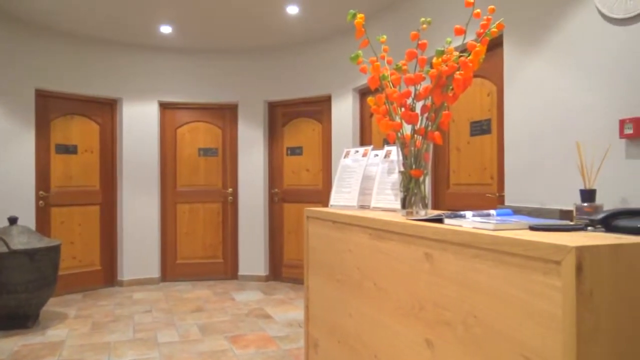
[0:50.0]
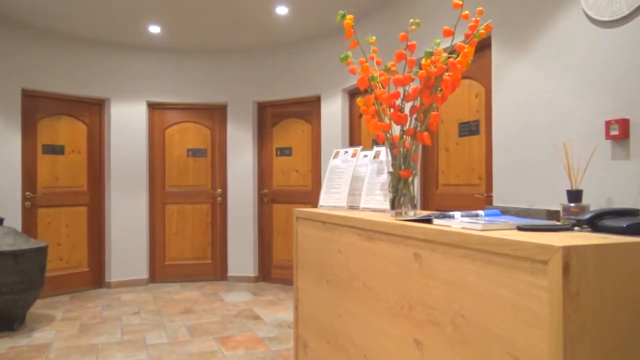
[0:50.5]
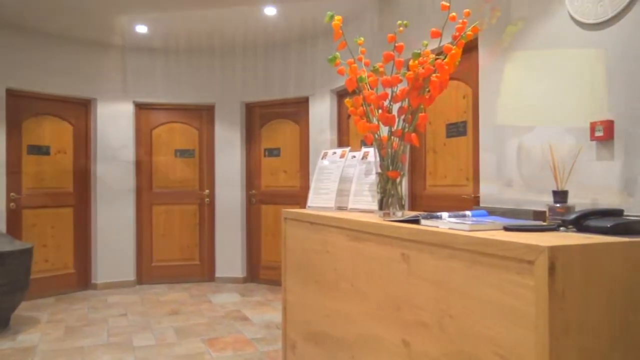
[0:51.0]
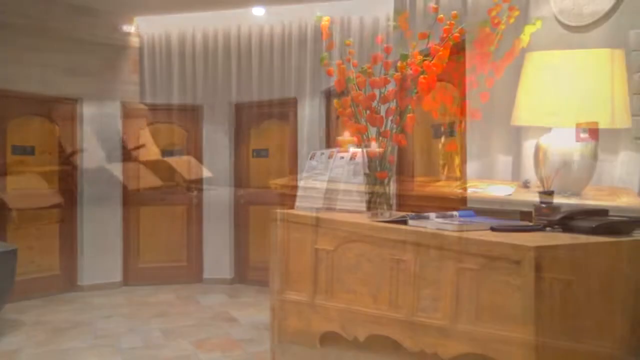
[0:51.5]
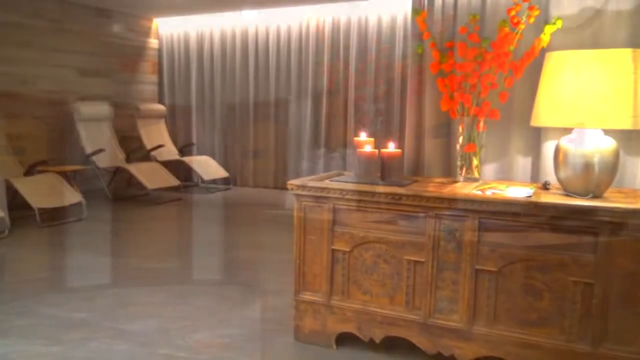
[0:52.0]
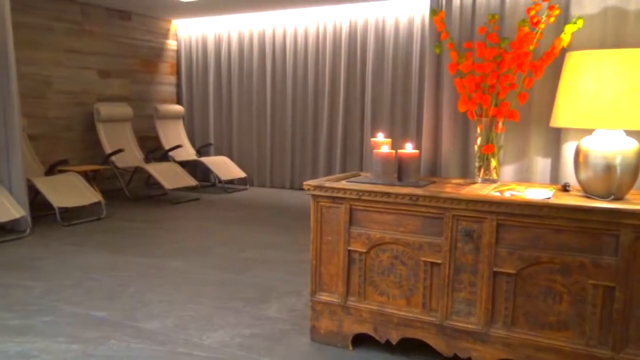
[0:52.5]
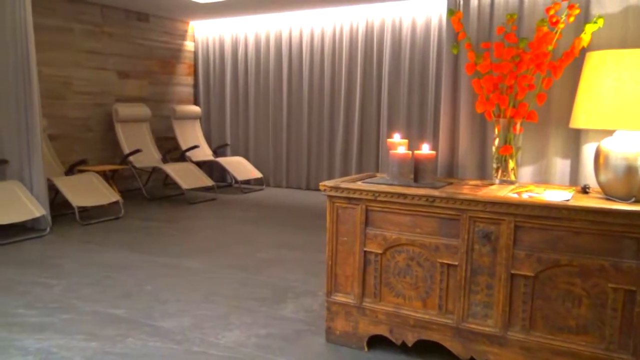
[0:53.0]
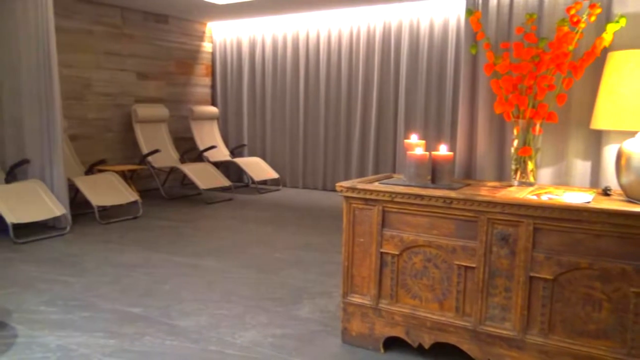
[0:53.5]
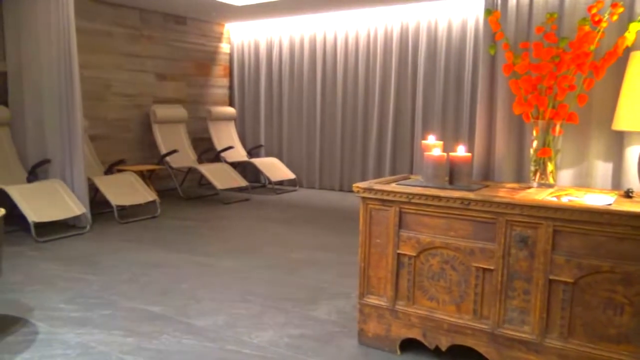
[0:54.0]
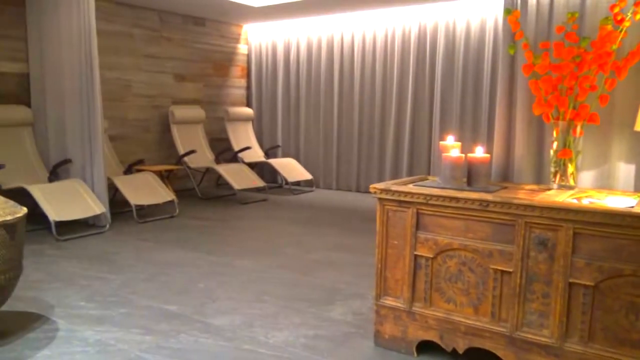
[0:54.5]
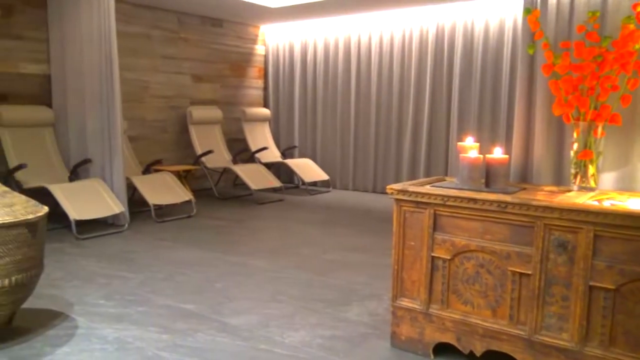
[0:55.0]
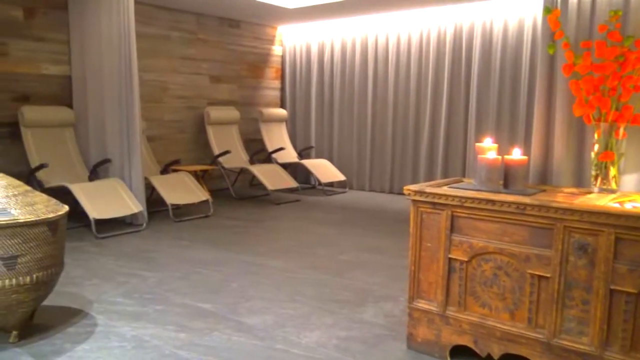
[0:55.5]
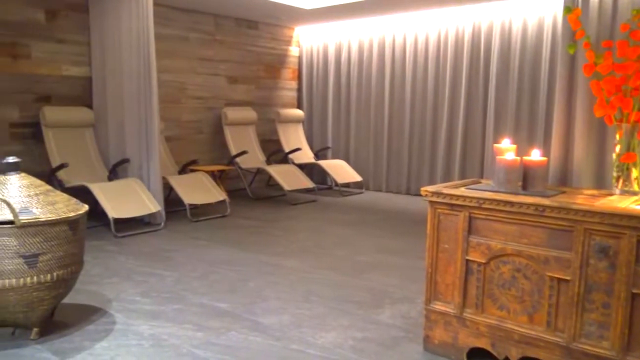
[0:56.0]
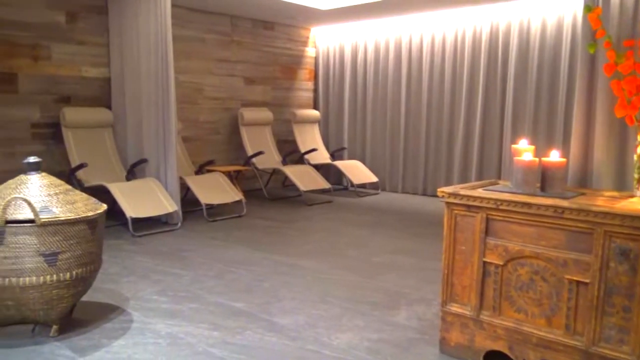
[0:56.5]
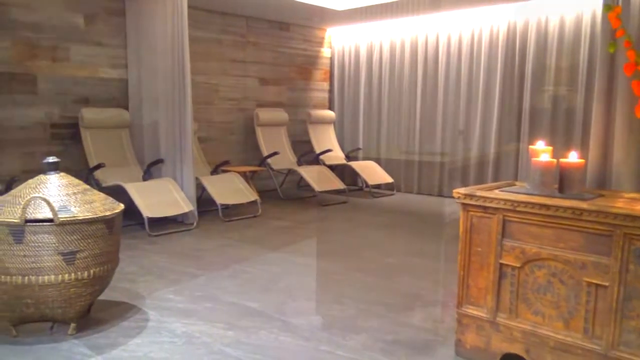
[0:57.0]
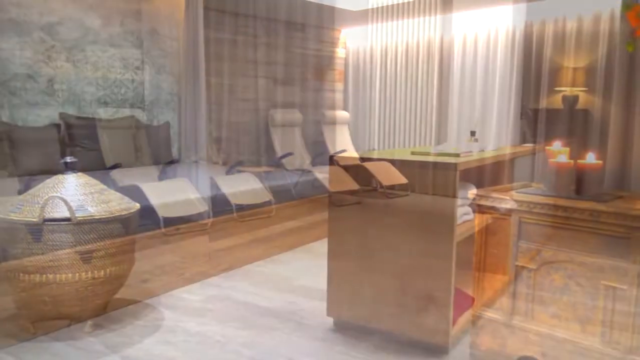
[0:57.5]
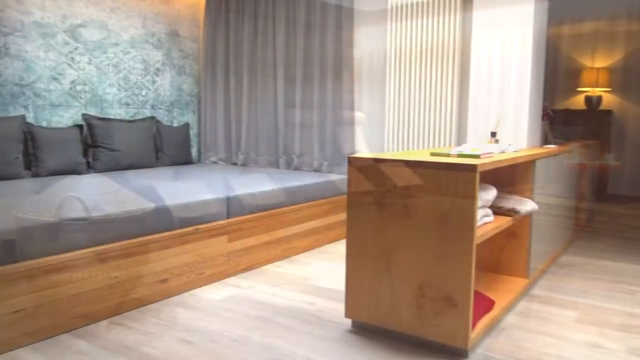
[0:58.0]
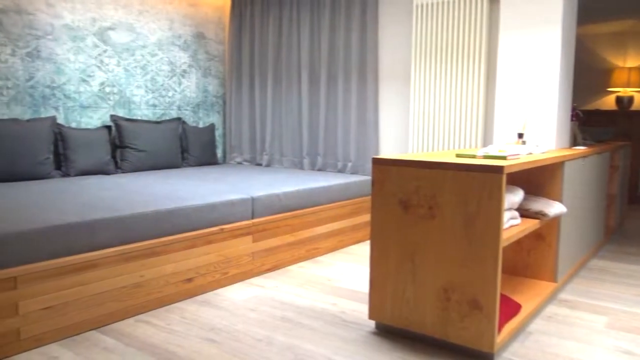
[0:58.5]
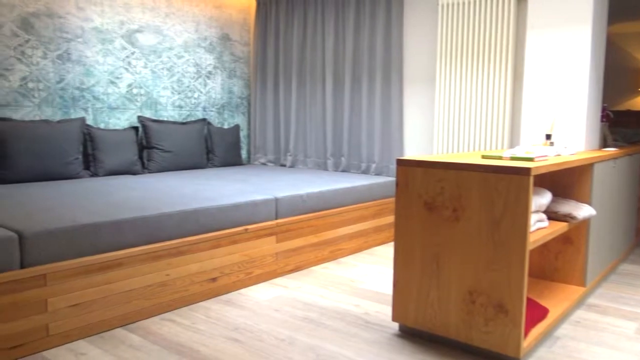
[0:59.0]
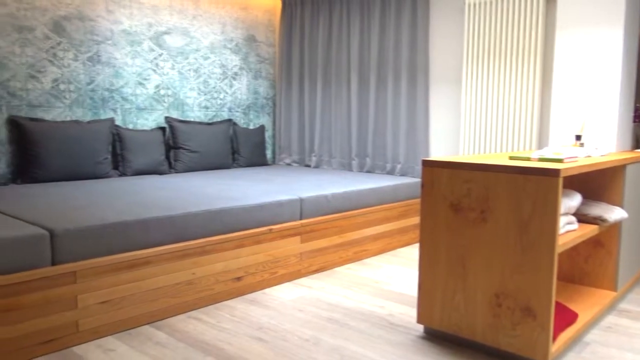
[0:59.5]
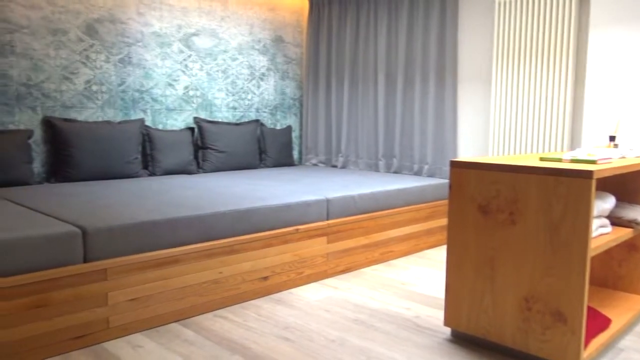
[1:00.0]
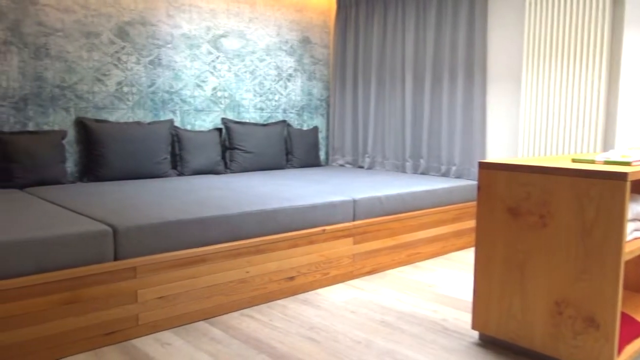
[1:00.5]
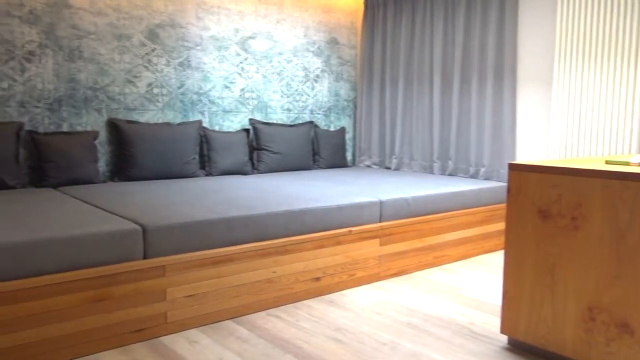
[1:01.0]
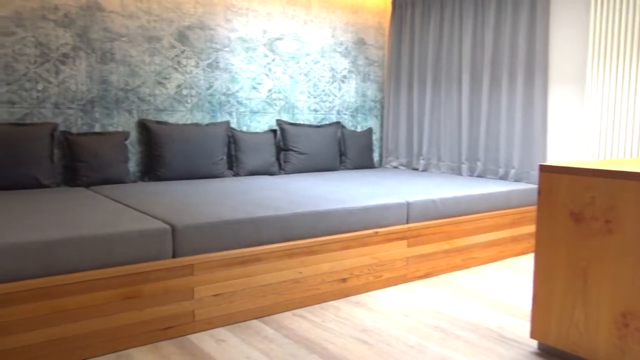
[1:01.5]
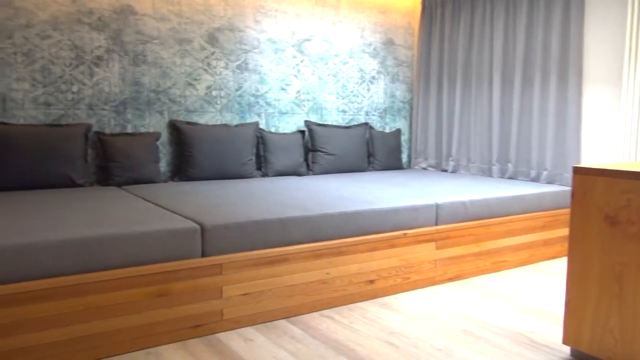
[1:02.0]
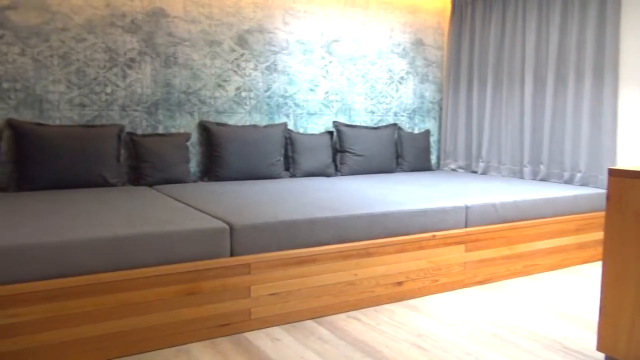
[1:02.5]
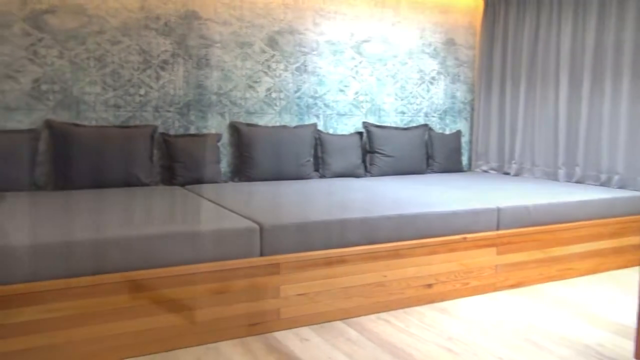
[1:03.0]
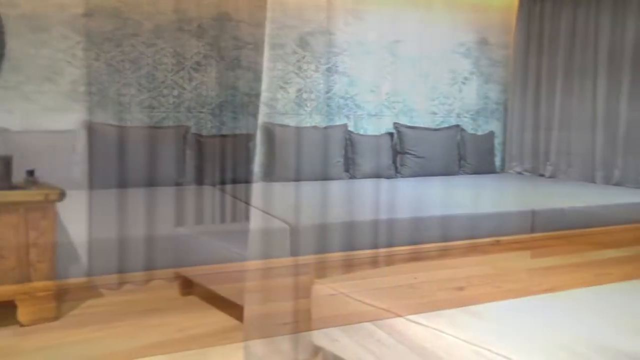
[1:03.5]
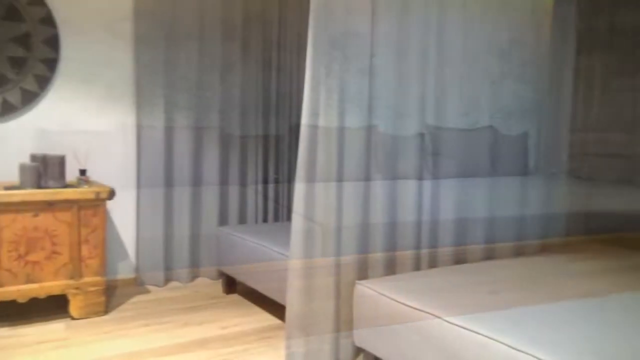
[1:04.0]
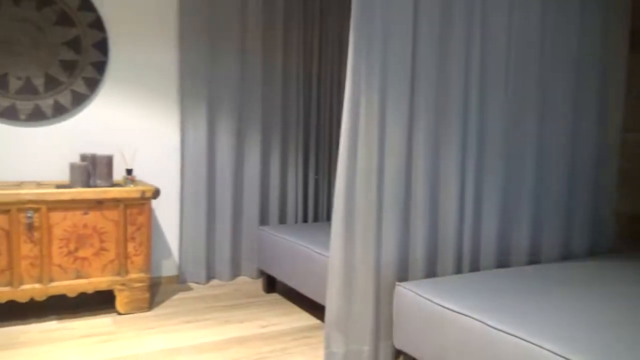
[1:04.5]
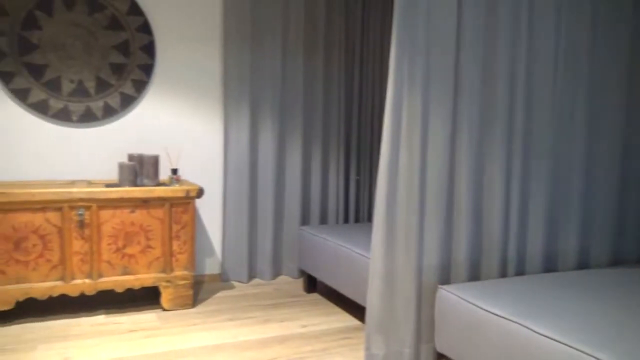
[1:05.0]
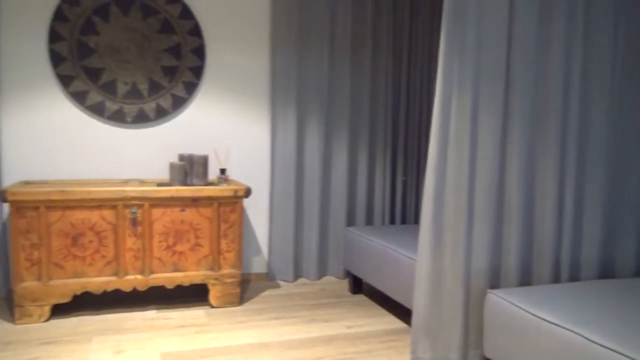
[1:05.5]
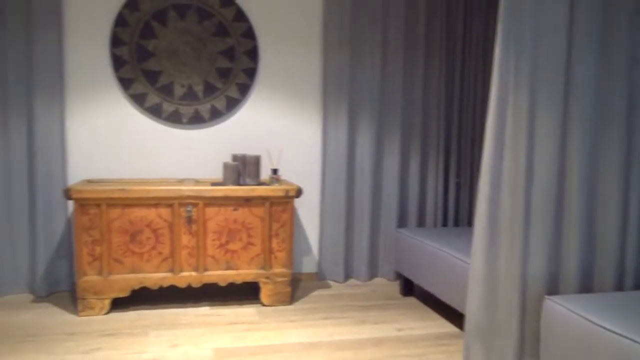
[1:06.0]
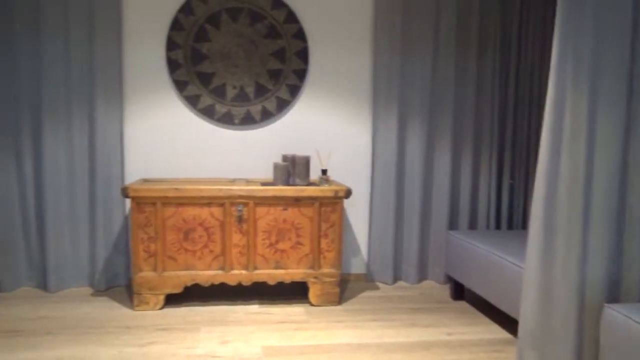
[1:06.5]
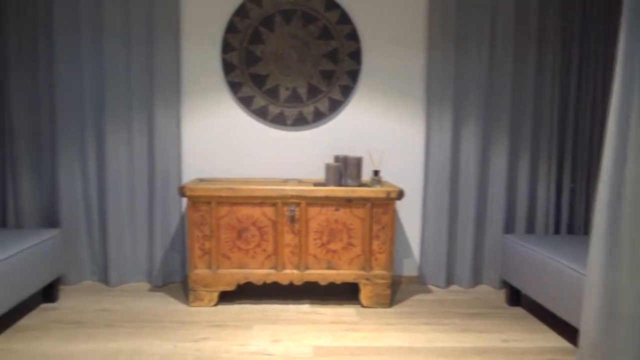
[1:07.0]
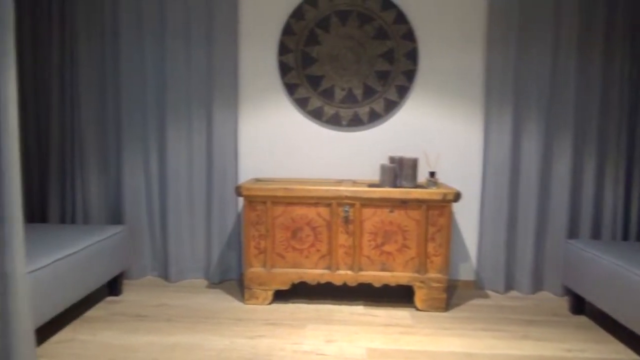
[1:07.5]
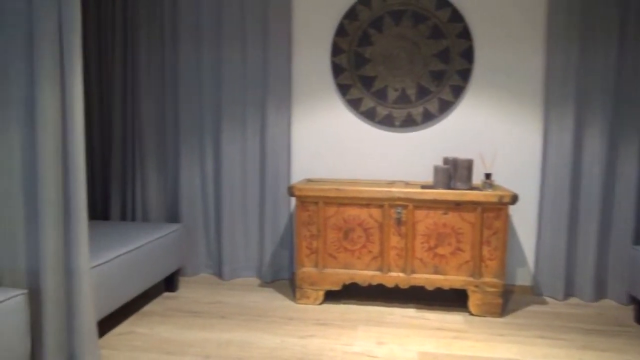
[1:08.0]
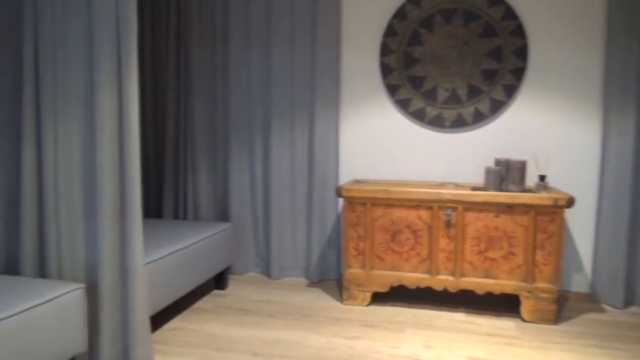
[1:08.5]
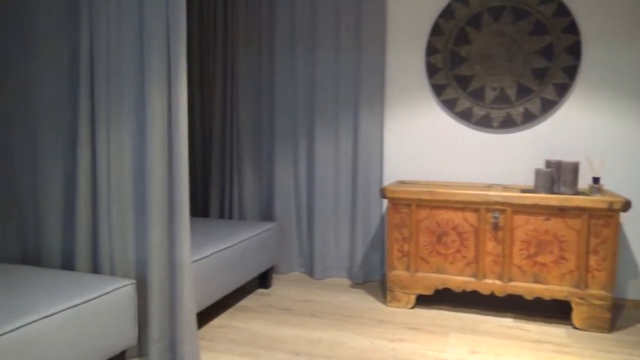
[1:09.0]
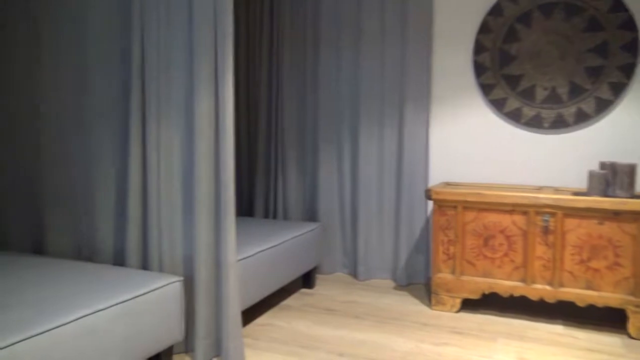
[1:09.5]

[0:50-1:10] A hallway or room has a concierge desk with a fire alarm behind it and a vase filled with orange flowers on top of the desk. Placards with indiscernible information are on top of the desk, and five separate doors are visible just beyond the desk against the back wall. The video pans around the room before showing a lounge with a beautifully carved wooden desk topped with orange flowers and lit candles. The dimly lit lounge has five separate chairs with a reclining feature. The video then transitions to another room with a large mattress on the floor and pillows. The video pans around this dimly lit space, showing various sectional sofas curtained off with individual curtains. The sofa and mattresses are blue.